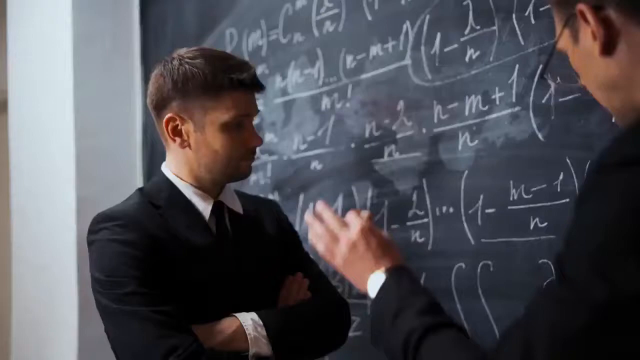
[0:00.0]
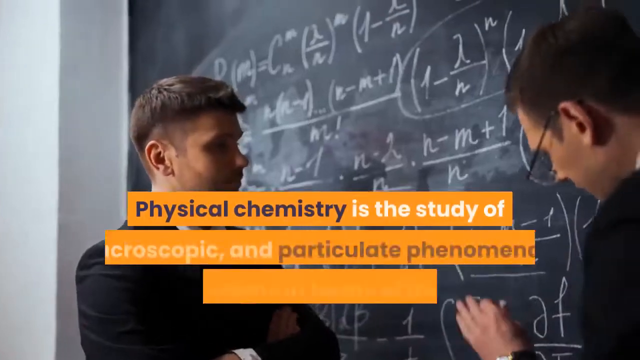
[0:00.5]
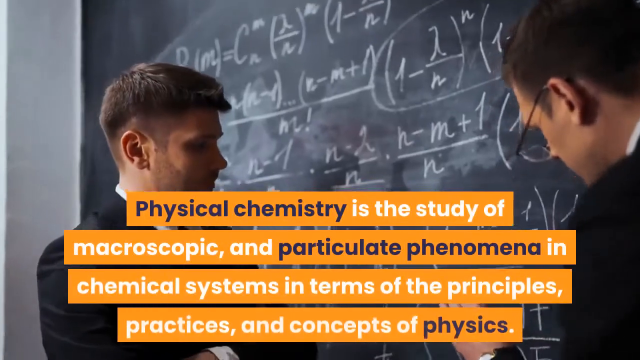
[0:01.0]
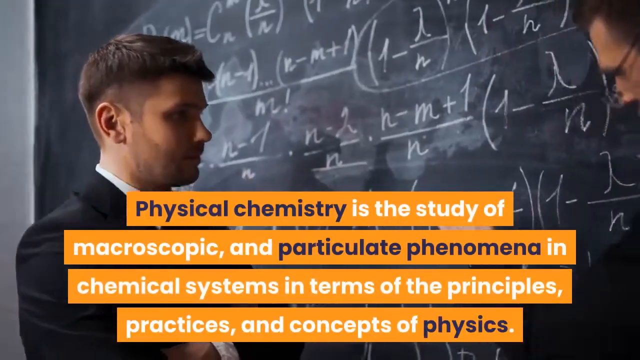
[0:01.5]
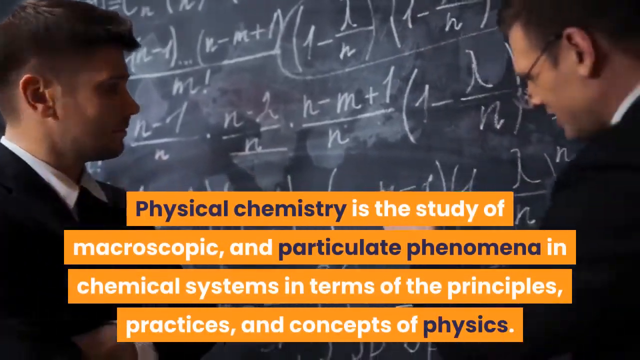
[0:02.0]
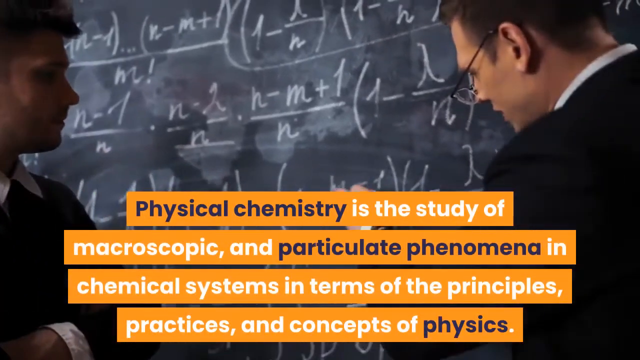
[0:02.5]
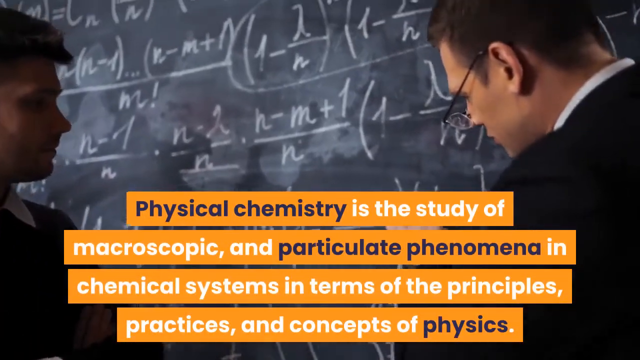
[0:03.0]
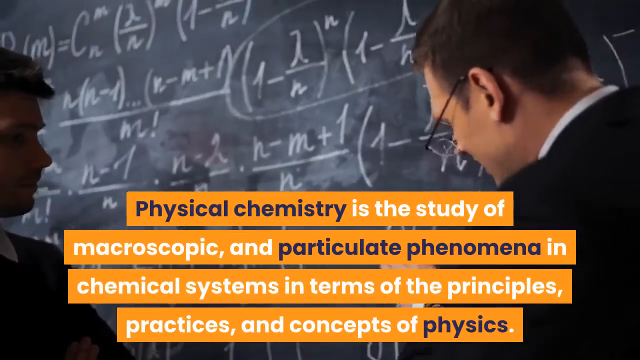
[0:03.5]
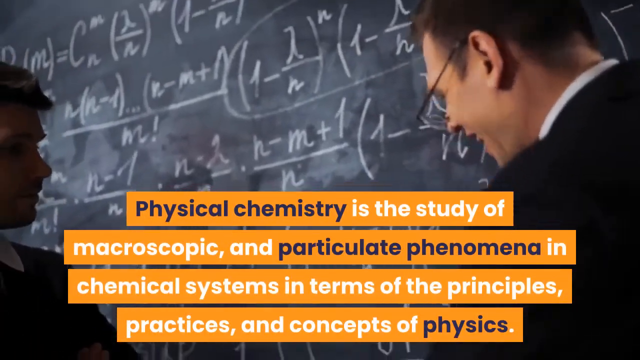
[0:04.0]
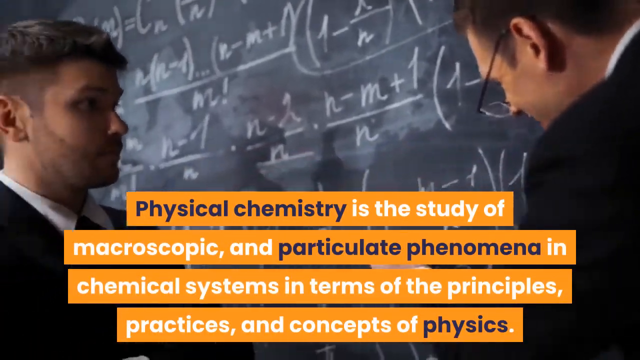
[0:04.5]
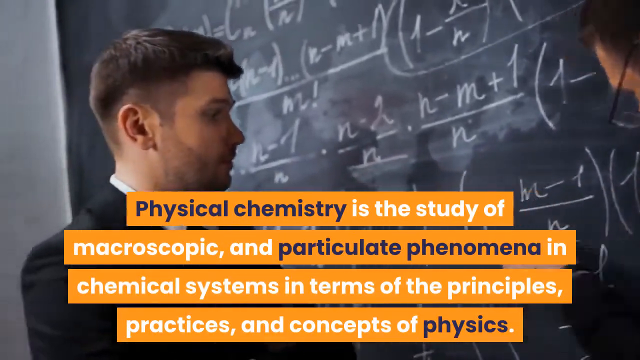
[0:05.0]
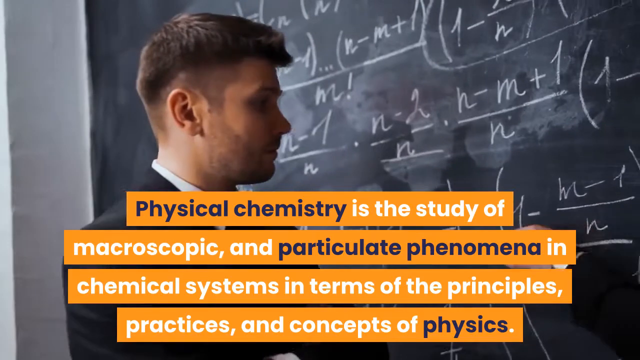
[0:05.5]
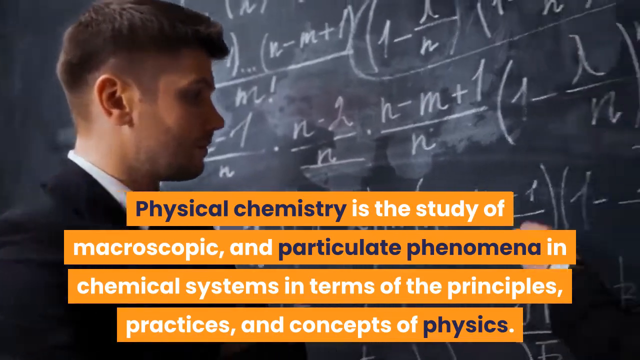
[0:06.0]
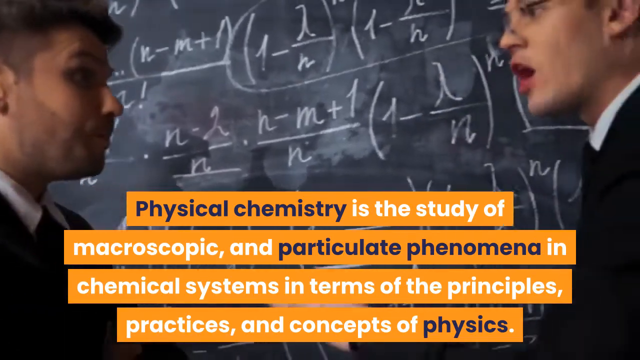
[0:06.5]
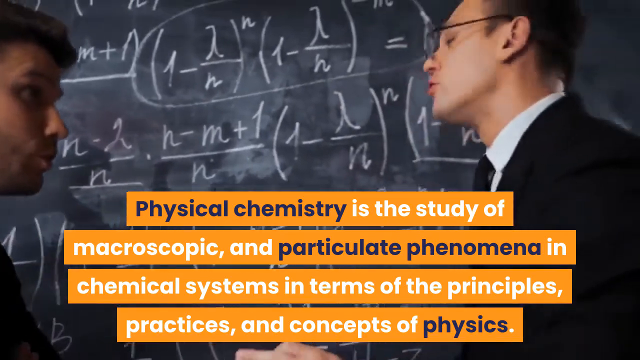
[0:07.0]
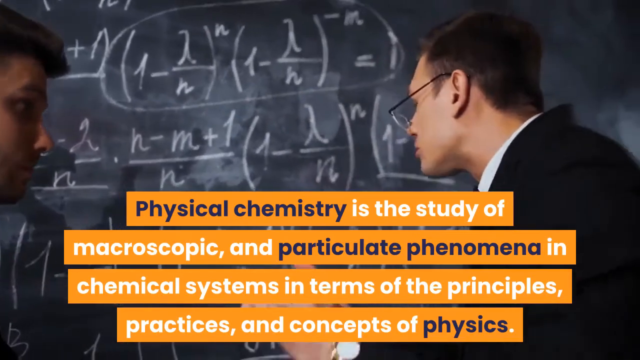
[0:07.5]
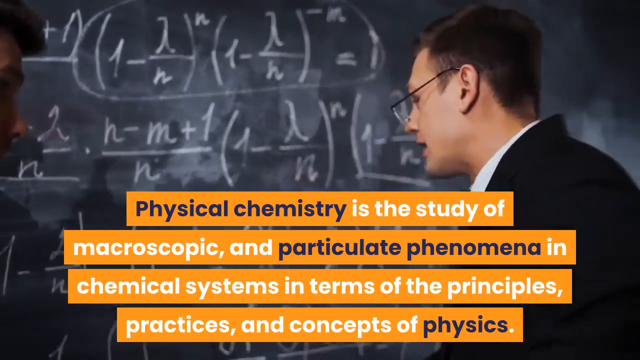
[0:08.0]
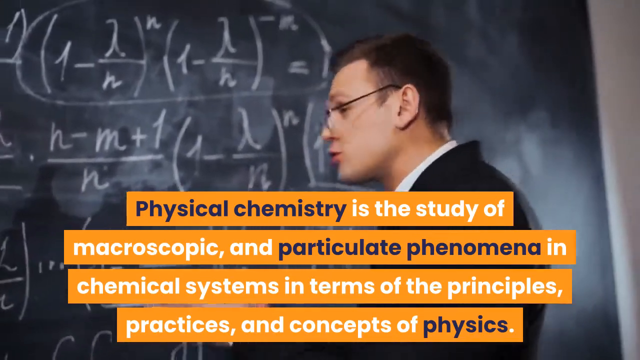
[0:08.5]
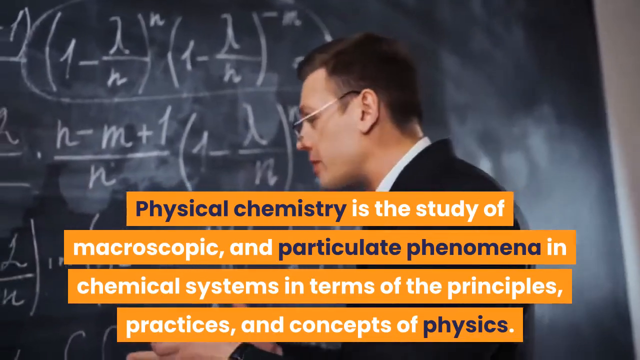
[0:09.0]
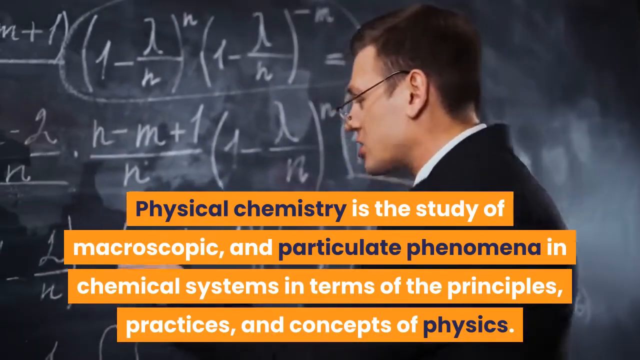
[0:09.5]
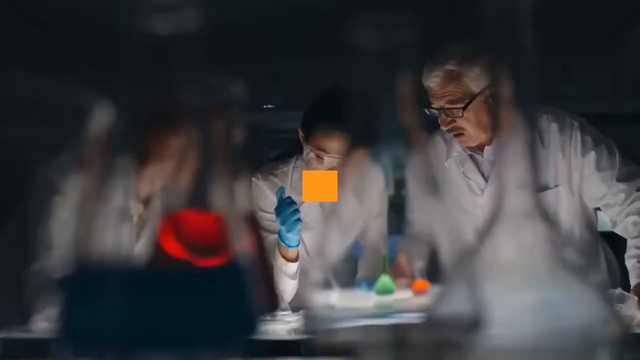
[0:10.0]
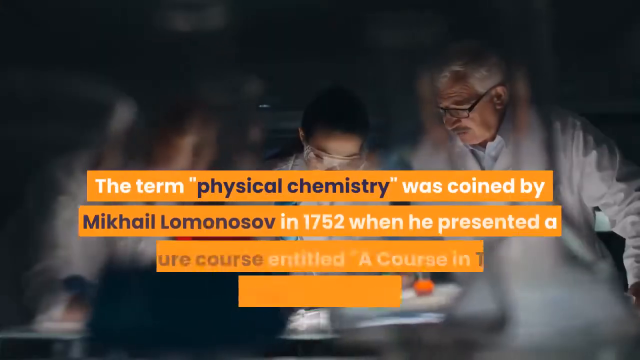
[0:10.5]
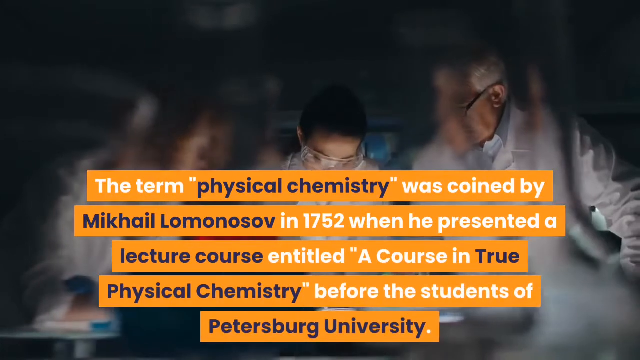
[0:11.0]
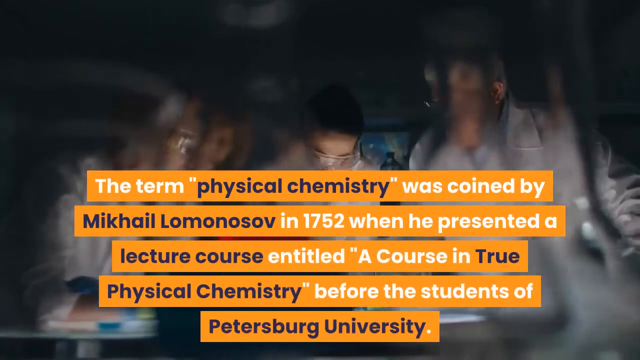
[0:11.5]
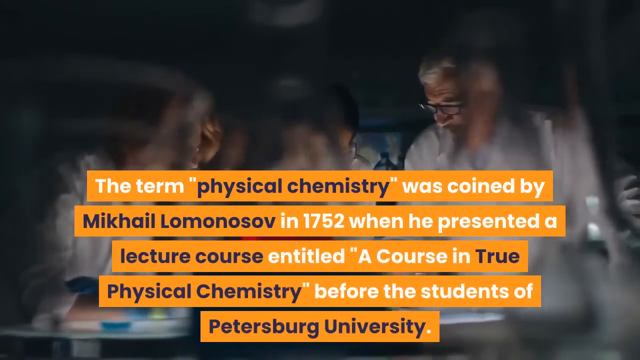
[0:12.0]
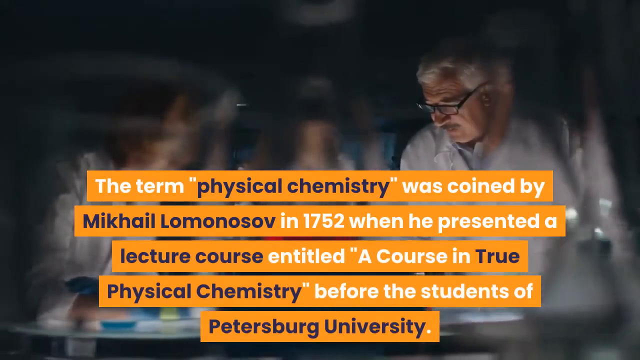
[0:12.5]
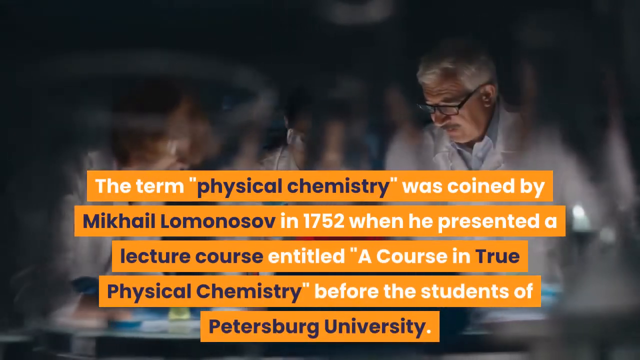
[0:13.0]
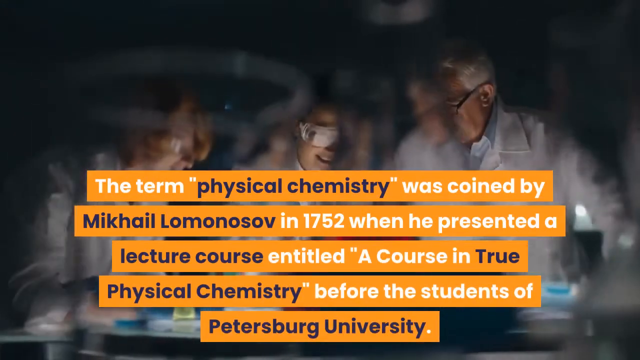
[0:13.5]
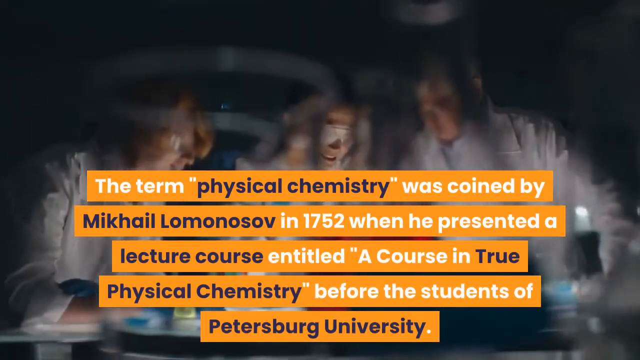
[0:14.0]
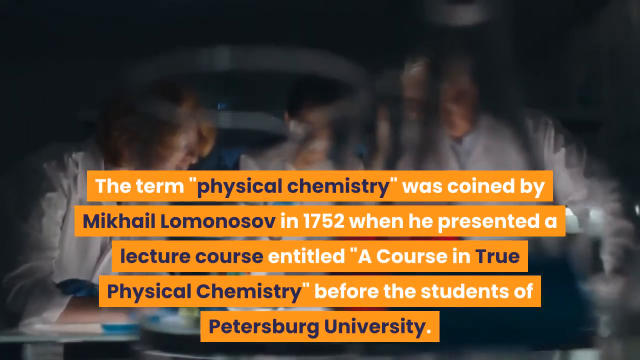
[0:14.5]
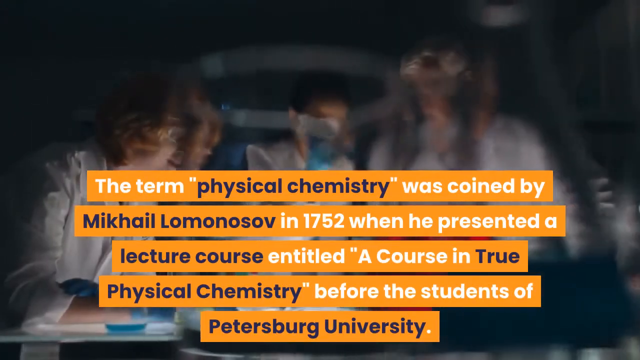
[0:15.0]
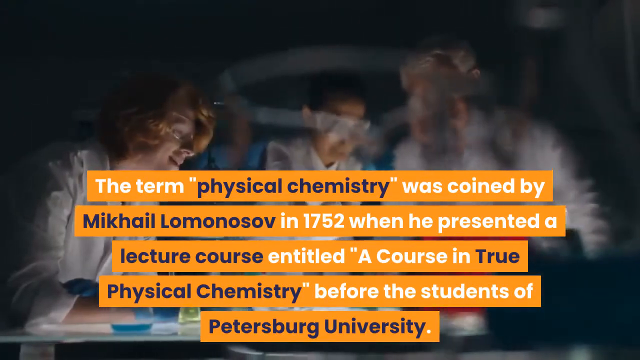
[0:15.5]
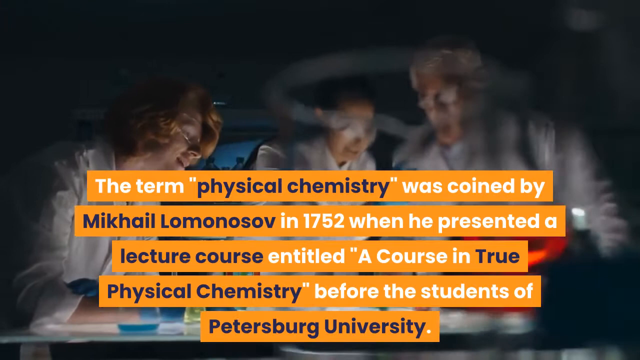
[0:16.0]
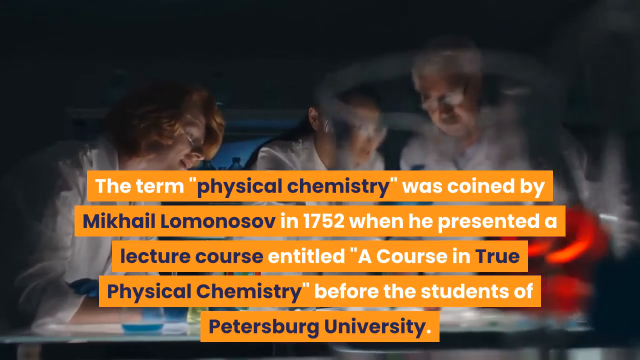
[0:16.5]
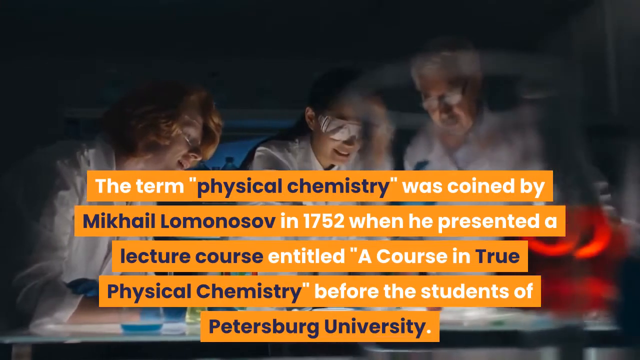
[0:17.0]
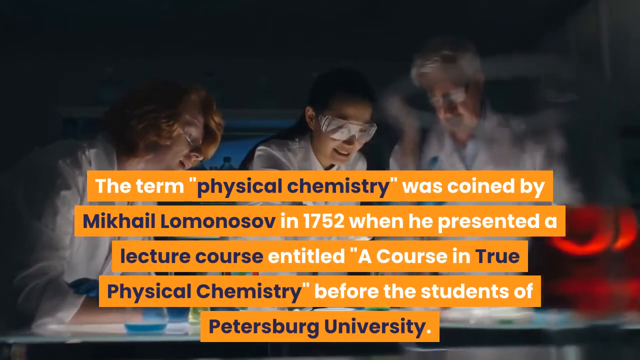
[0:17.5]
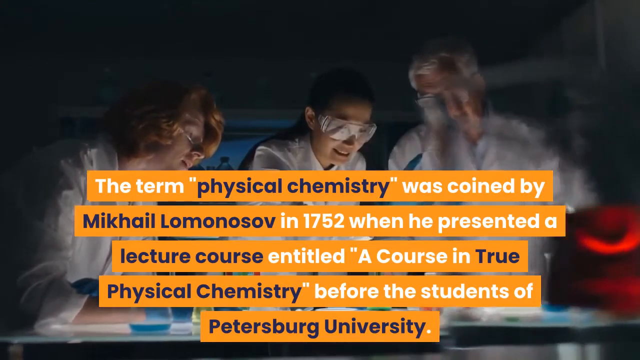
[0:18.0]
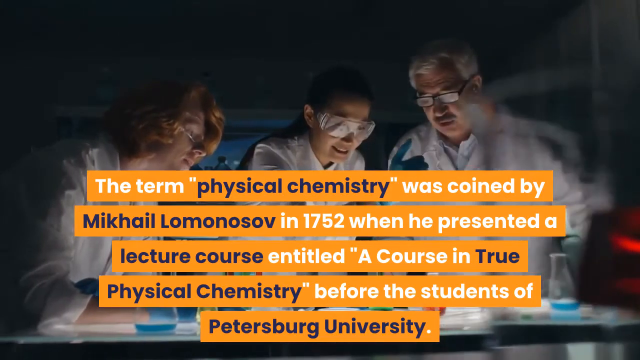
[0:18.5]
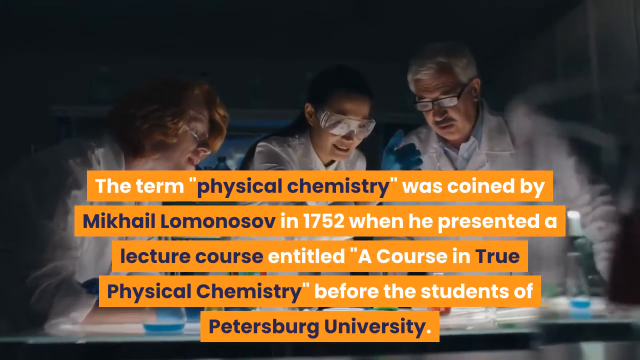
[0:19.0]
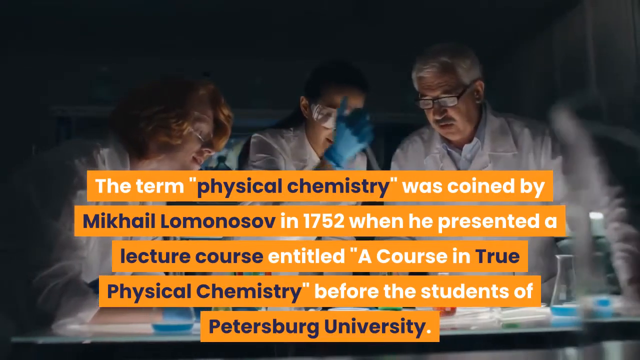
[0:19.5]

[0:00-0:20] Two men use chalk to draw on a chalkboard. Beneath them, a caption in an orange banner reads: "physical chemistry is the study of macroscopic and particulate phenomena in chemical systems in terms of the principles, practices, and concepts of physics." Both men are dressed nicely in suits and write chemistry equations on the board. They interact and collaborate, seemingly trying to discuss or figure out the problem. The man on the right, who is writing the equations, seems to lead the conversation, explaining the concepts to the other man more than the other man speaks. Another caption appears about the term physical chemistry being presented in 1752, mentioning a lecture course presented at that time at Petersburg University.